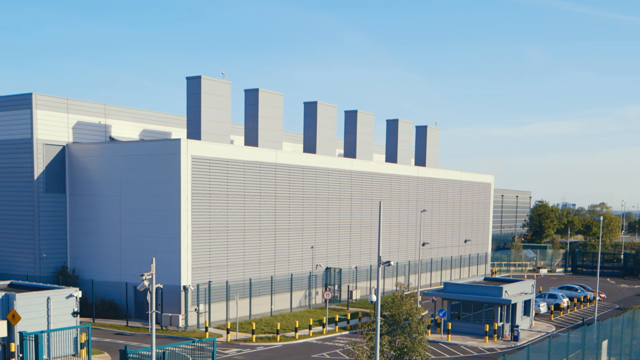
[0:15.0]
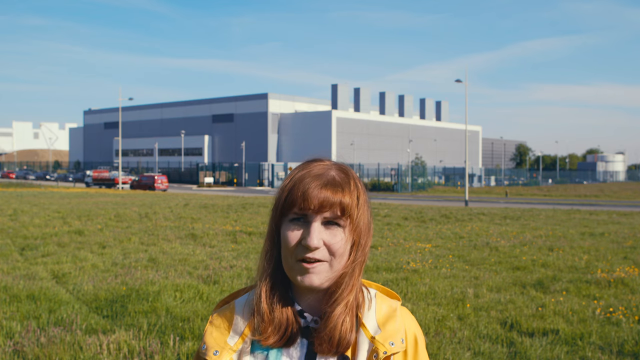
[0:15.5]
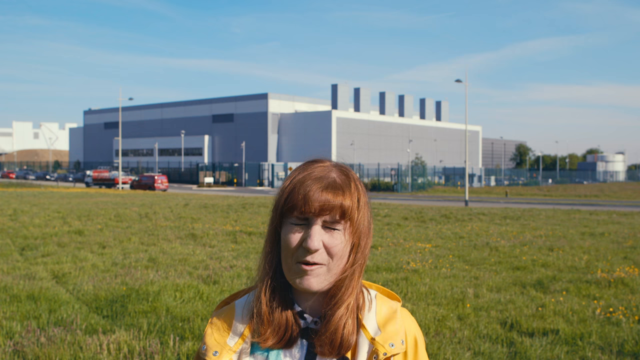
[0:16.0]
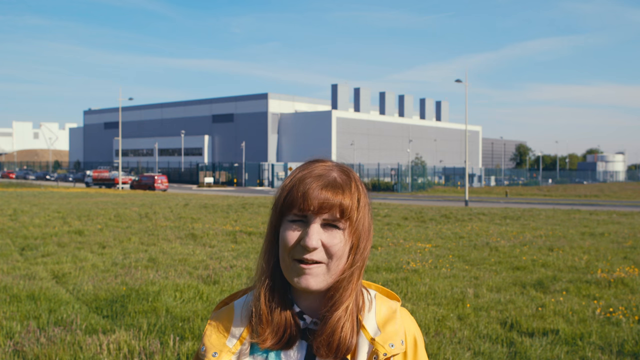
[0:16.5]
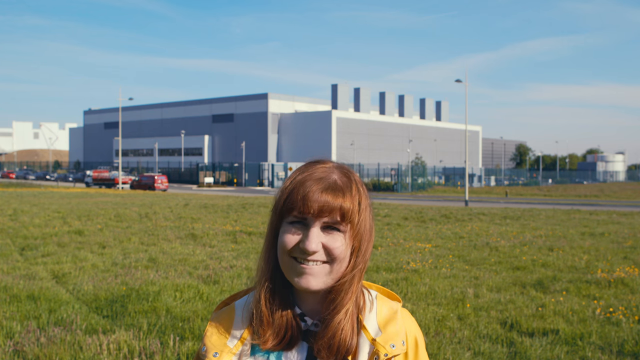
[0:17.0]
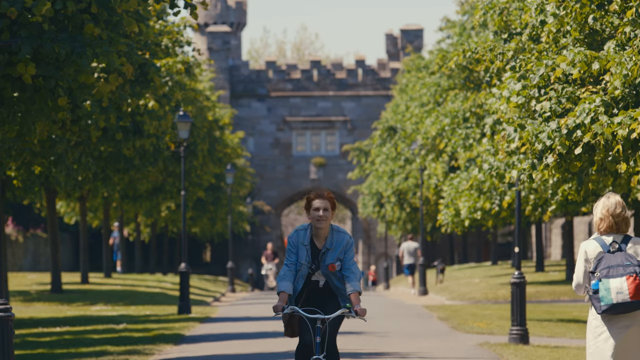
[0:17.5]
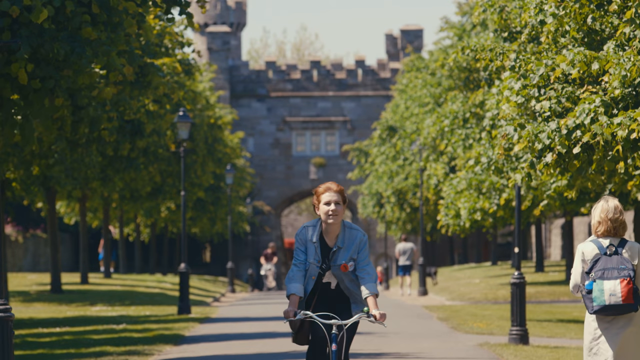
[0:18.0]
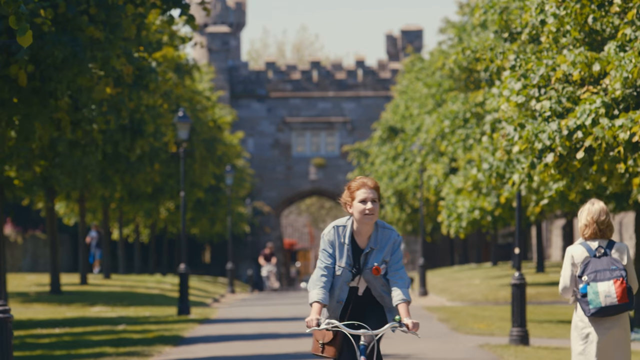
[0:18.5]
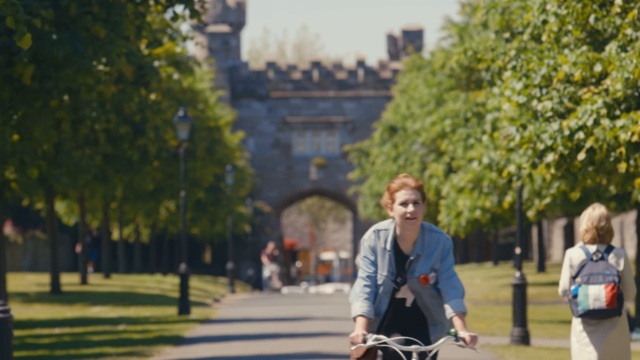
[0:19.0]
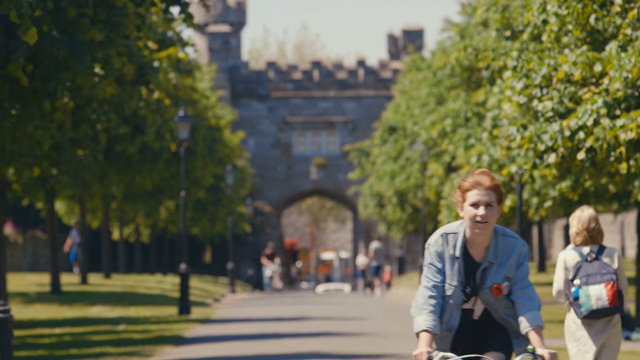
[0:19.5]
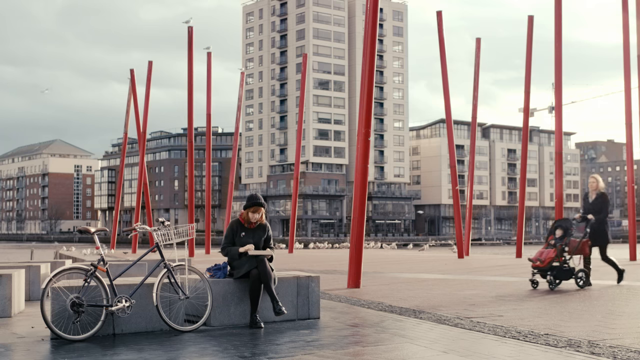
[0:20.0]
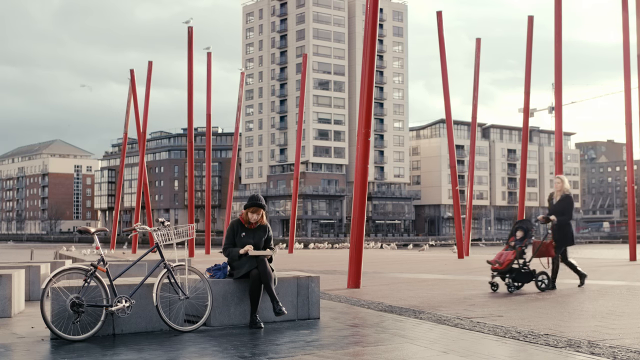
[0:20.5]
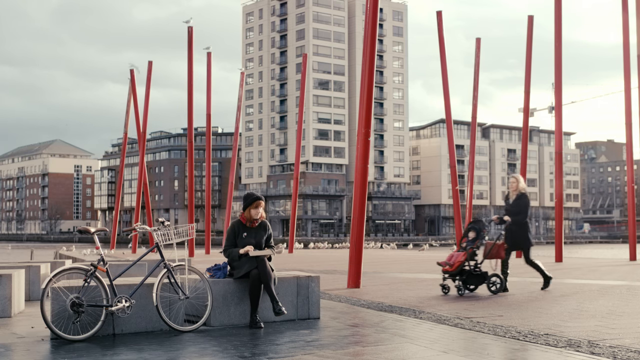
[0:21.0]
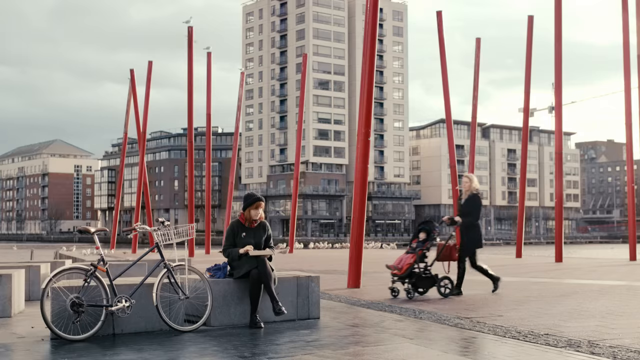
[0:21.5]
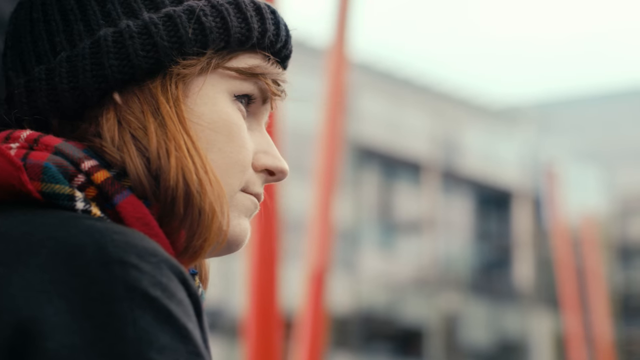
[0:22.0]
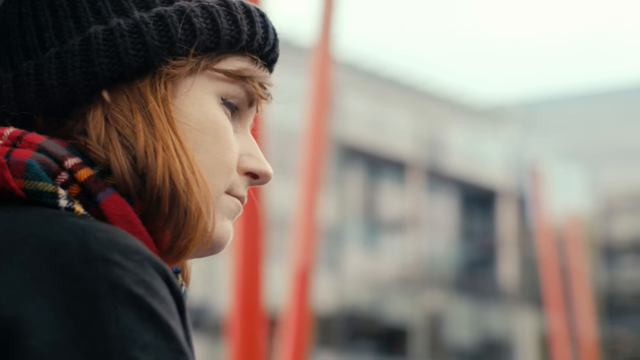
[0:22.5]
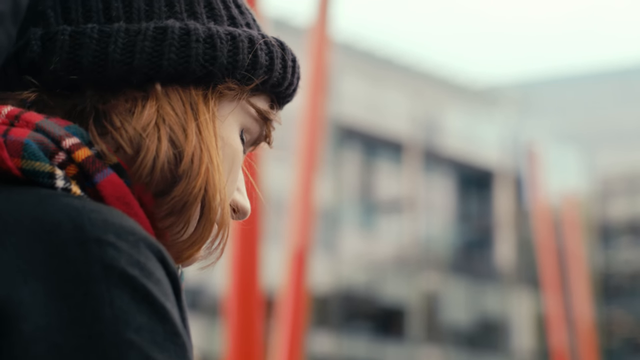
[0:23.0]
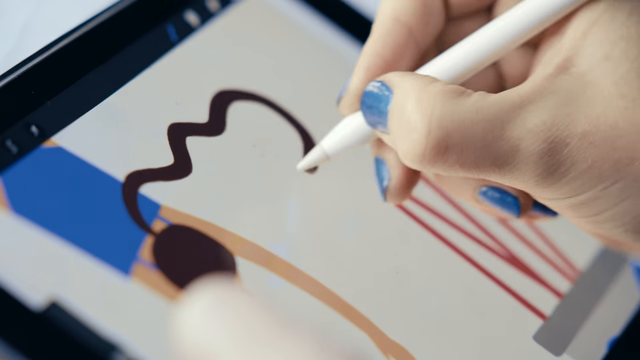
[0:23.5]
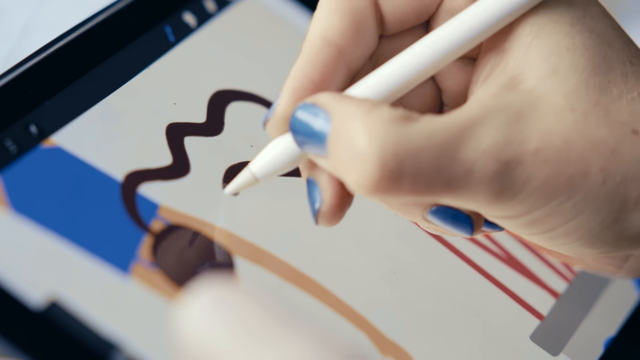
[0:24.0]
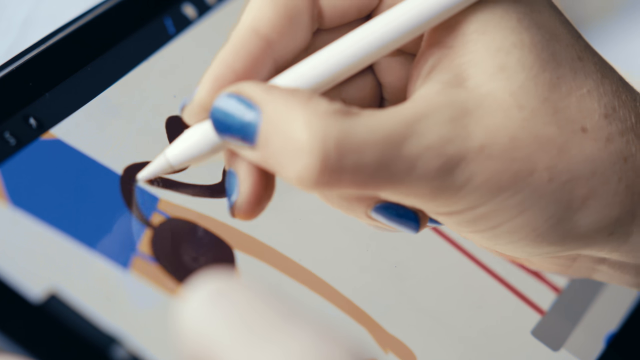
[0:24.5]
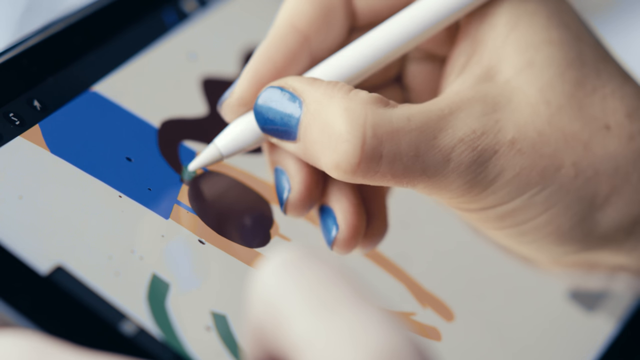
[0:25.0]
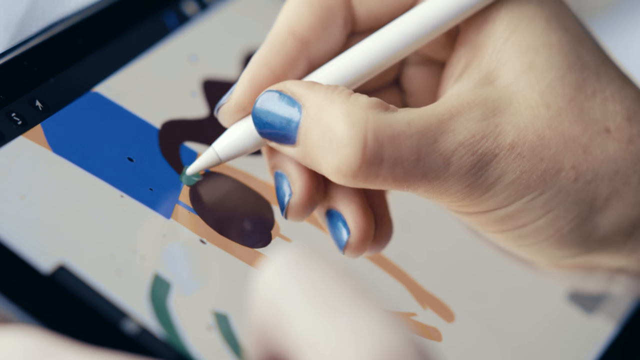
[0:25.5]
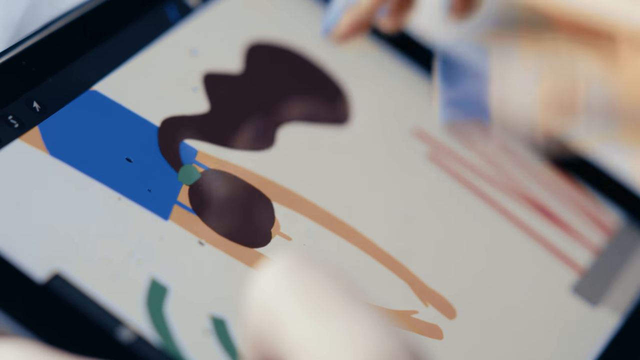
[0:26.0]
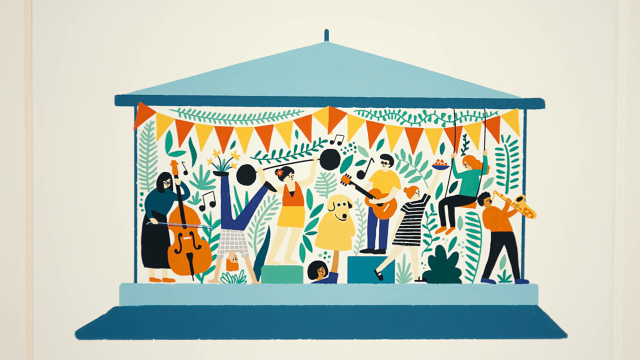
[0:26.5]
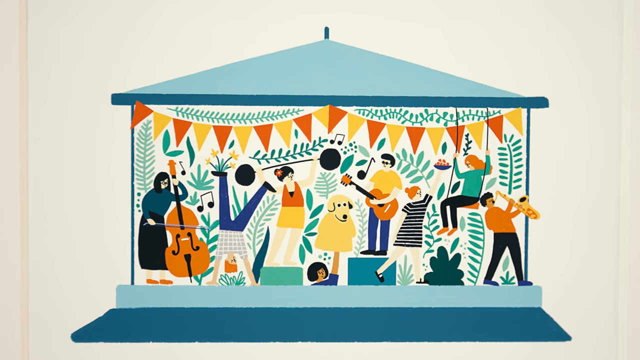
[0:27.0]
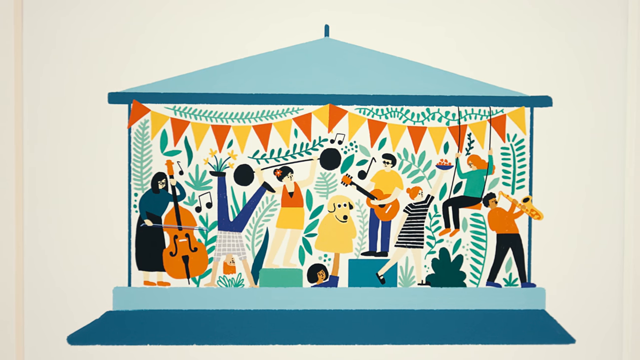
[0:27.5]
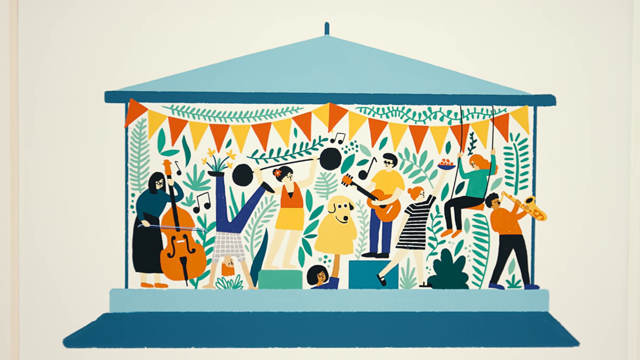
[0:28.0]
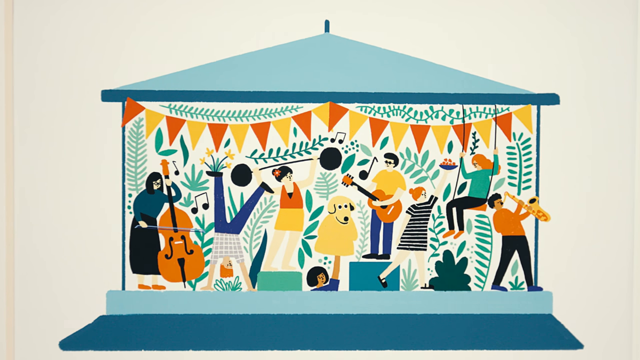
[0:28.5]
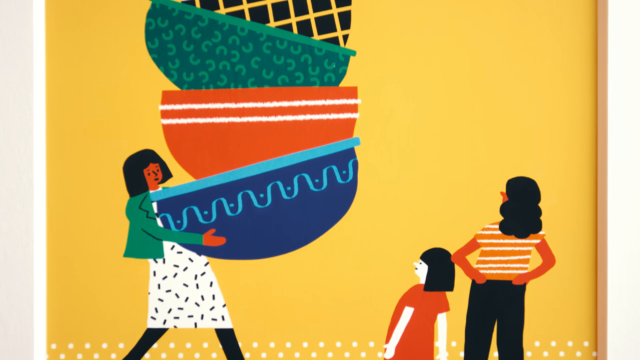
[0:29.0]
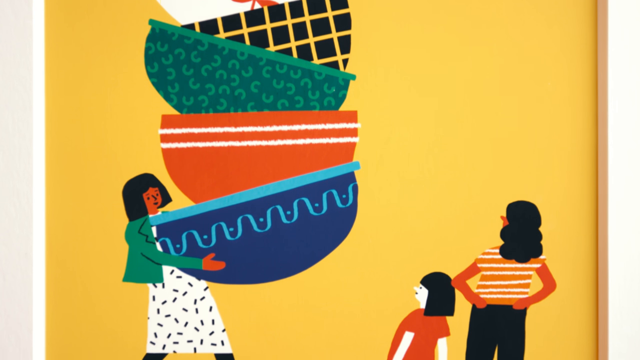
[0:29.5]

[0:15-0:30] Fuchsia nods. She has red hair, with red bangs combed down along her forehead, and wears a yellow garment that looks like a hooded raincoat. Behind her is a grassy field, and beyond the field is the large gray building. The scene transitions to a city road, where a woman rides her bicycle down a square, with what looks like a gray building directly behind her; the transition is very fast. Fuchsia is then shown seated, apparently on a bench. Large red sticks, larger than her, stick out of the ground in every direction and look like art installations. A row of buildings is behind her, and it looks like a cloudy day, apparently not the same day as when she was first shown. In the background a woman pushes a baby stroller across. Fuchsia then draws on her iPad, shown in close-up, followed by her art, which is very cartoony and colorful with different colors, including a blue, and what looks like a dog in the center. The second artwork shows a woman holding up huge, elaborate bowls stacked up.